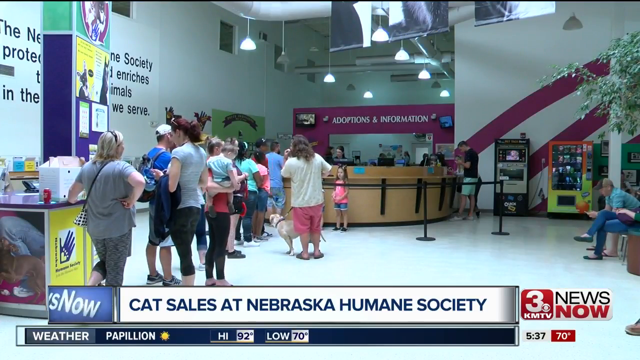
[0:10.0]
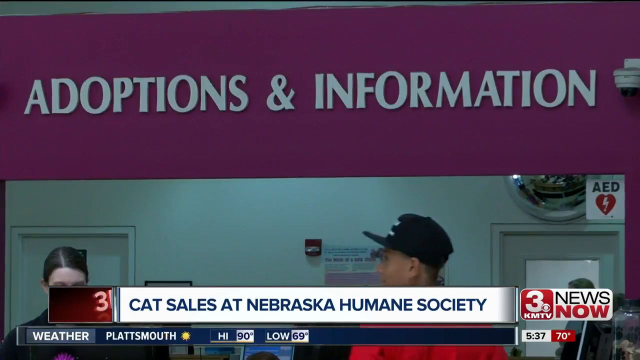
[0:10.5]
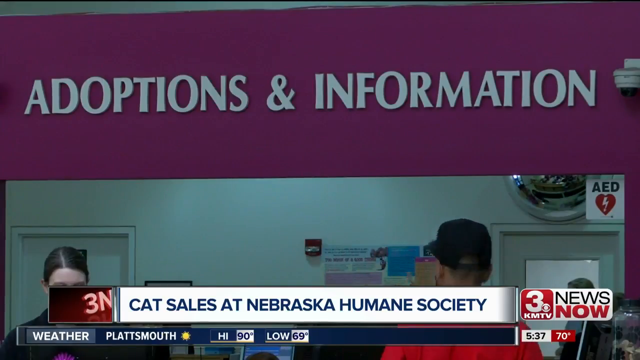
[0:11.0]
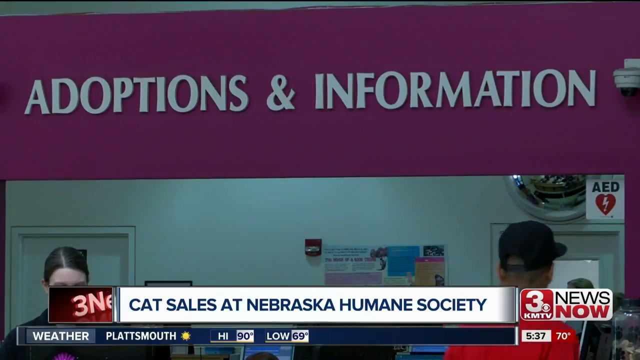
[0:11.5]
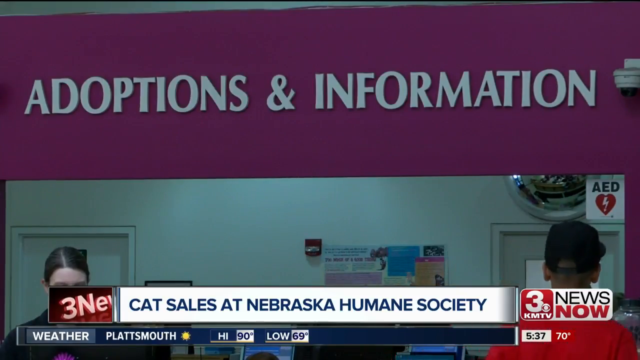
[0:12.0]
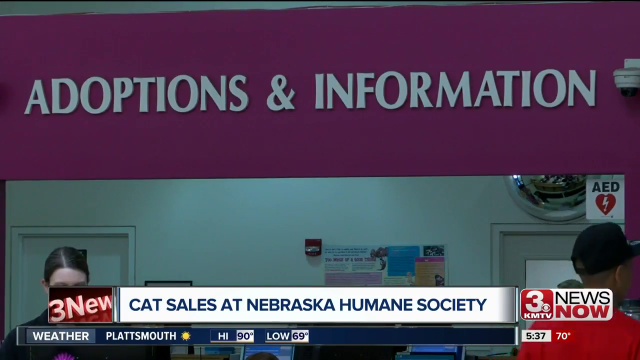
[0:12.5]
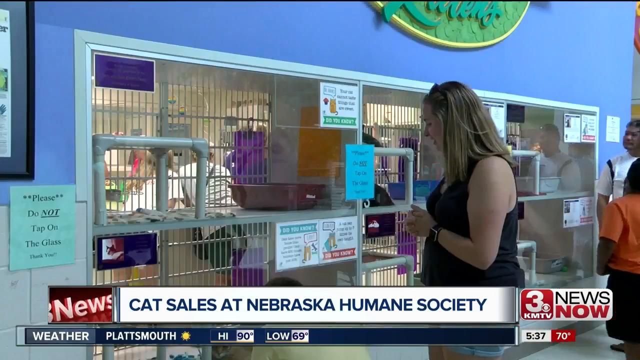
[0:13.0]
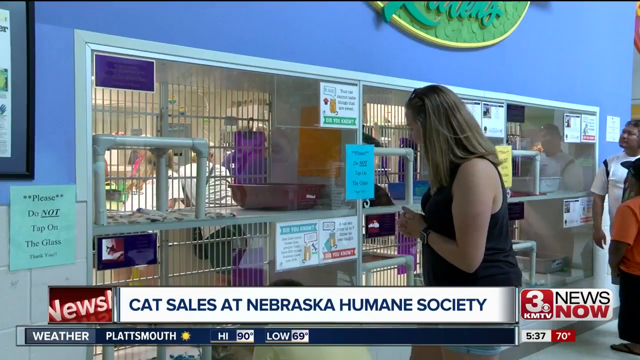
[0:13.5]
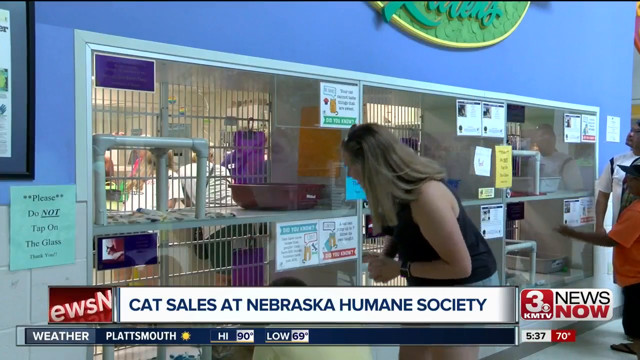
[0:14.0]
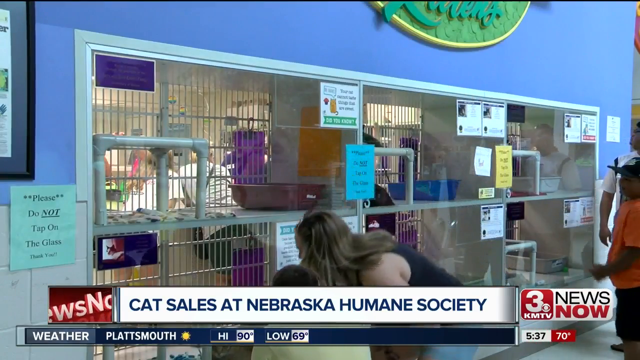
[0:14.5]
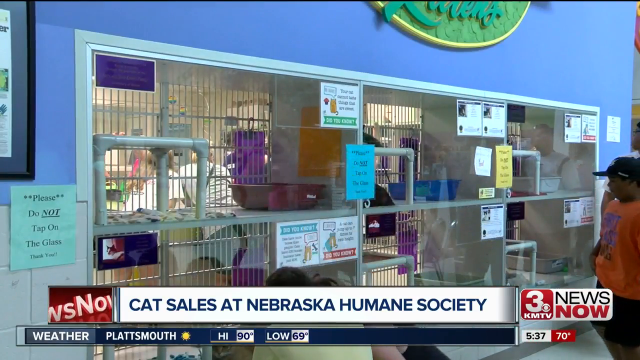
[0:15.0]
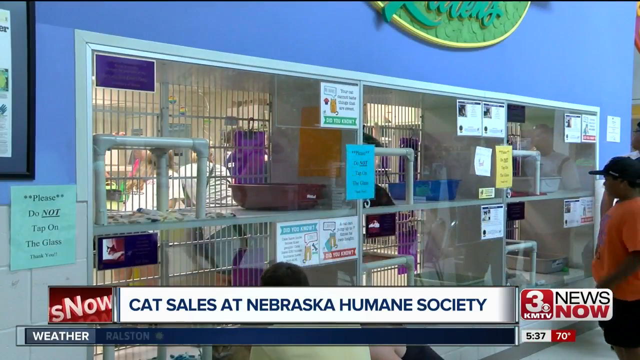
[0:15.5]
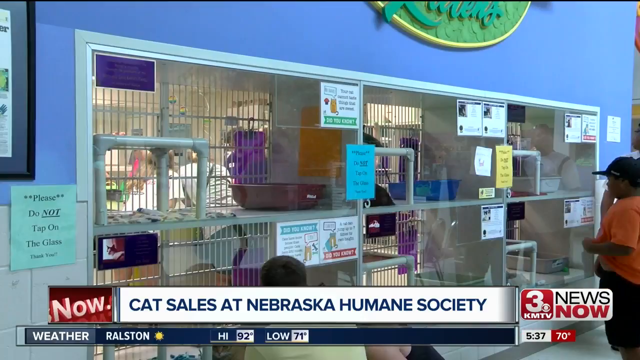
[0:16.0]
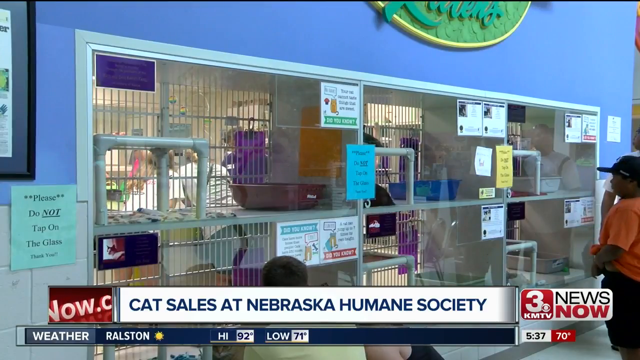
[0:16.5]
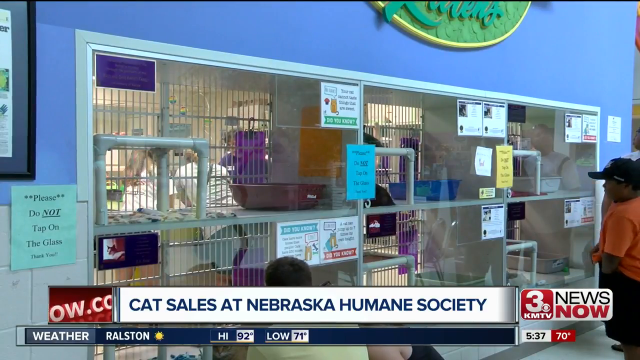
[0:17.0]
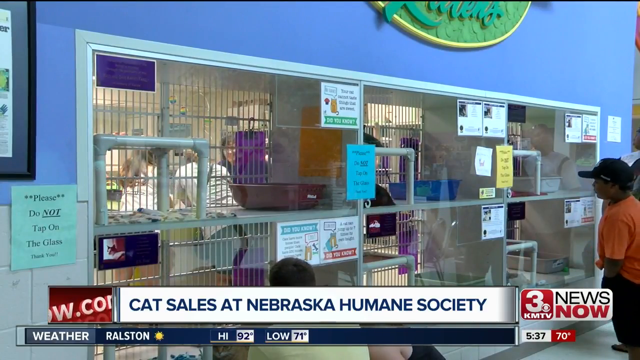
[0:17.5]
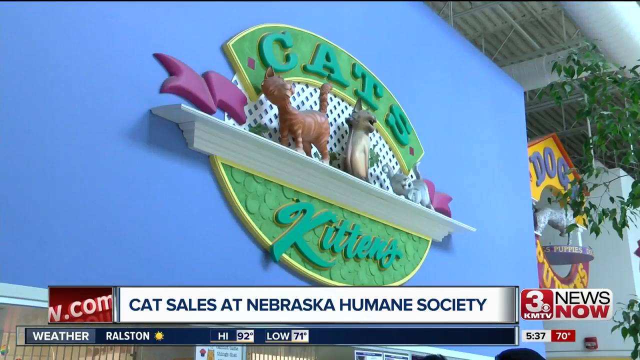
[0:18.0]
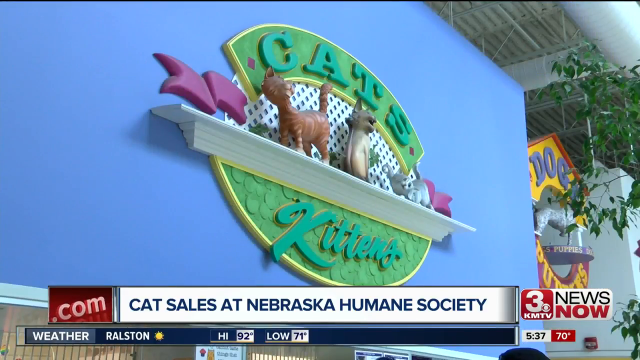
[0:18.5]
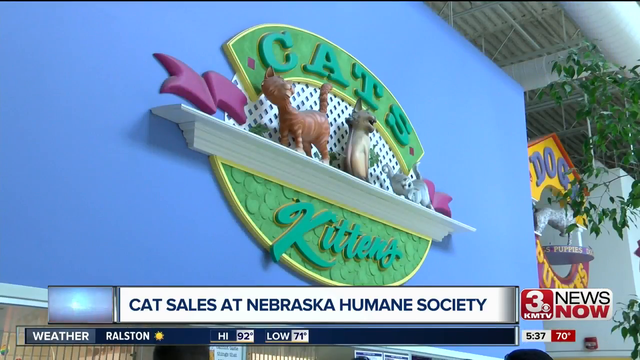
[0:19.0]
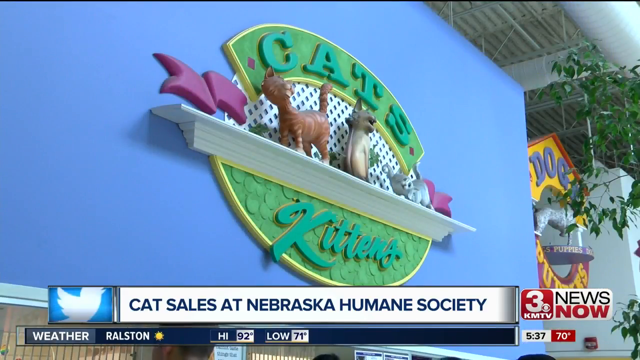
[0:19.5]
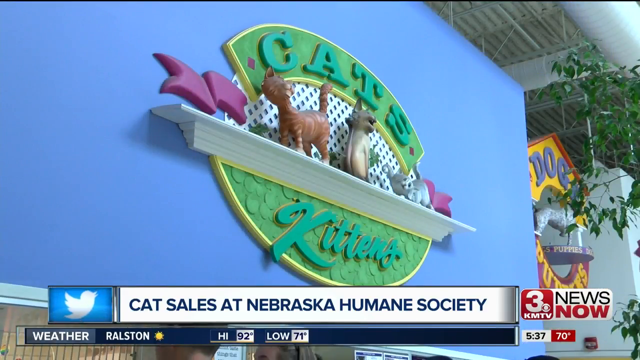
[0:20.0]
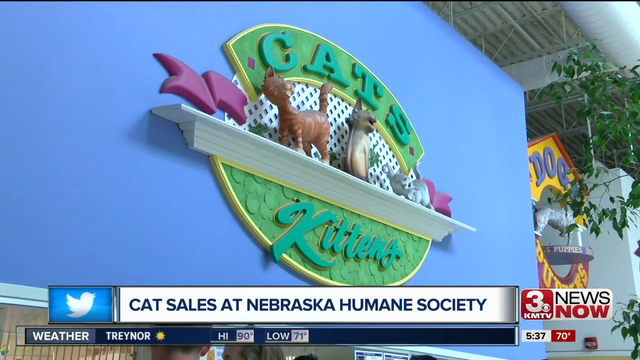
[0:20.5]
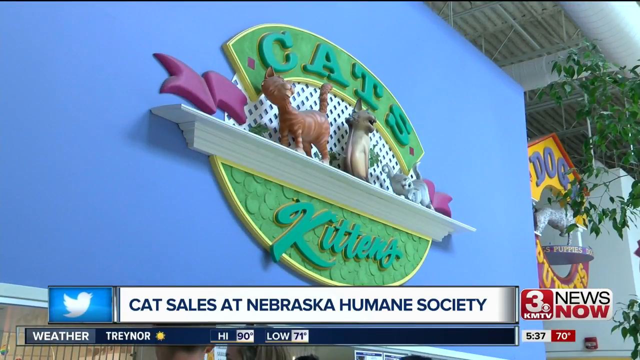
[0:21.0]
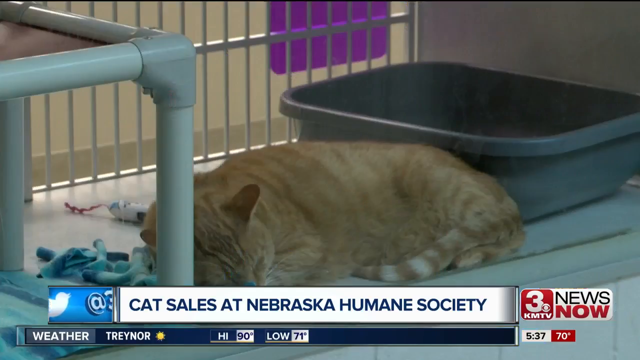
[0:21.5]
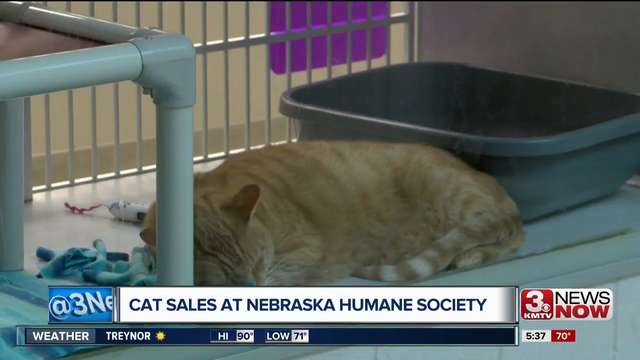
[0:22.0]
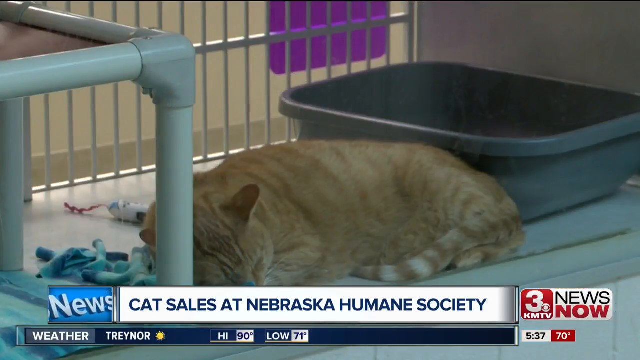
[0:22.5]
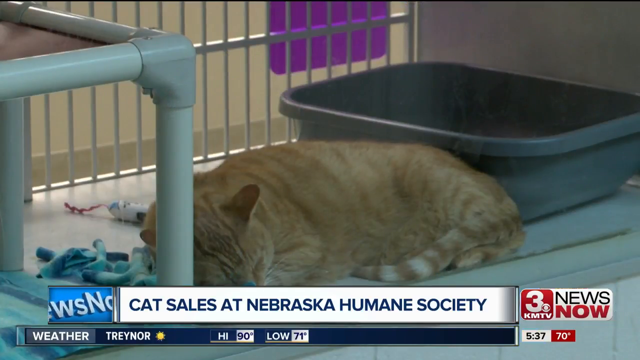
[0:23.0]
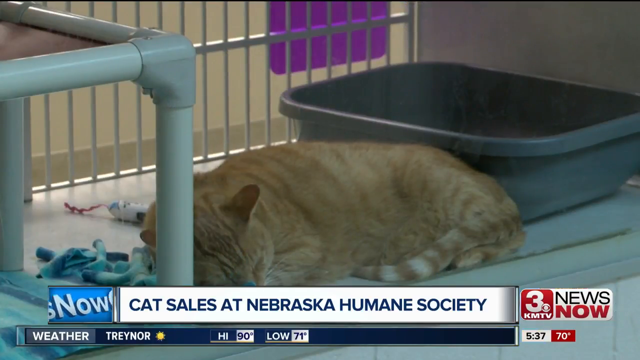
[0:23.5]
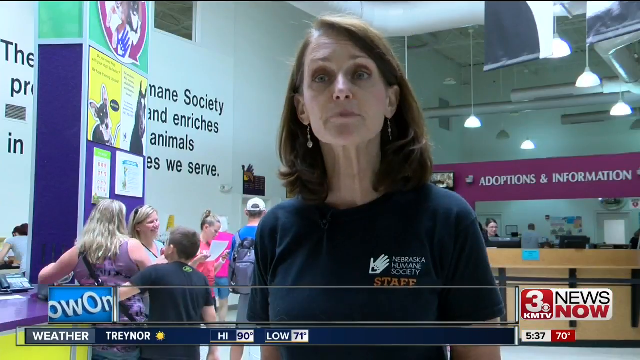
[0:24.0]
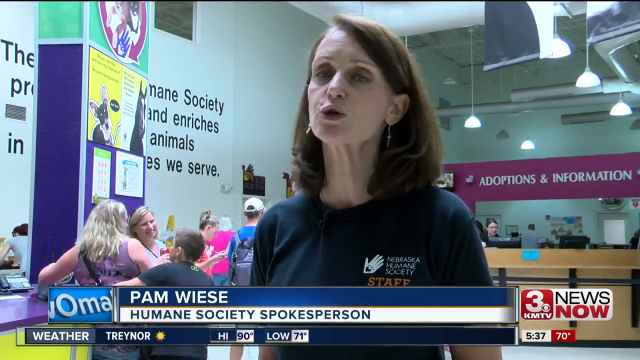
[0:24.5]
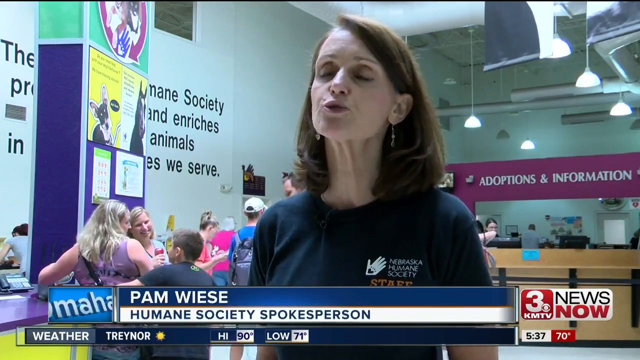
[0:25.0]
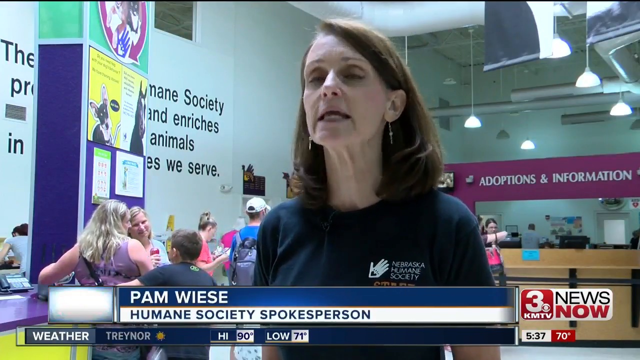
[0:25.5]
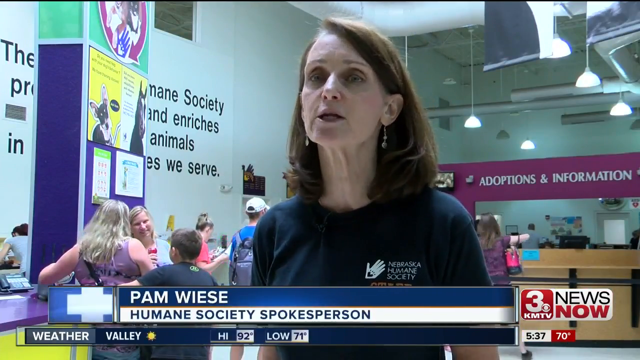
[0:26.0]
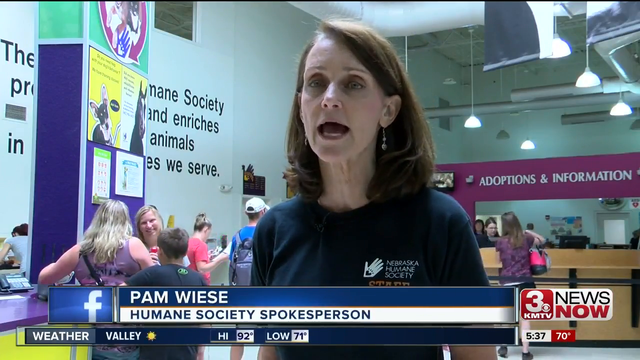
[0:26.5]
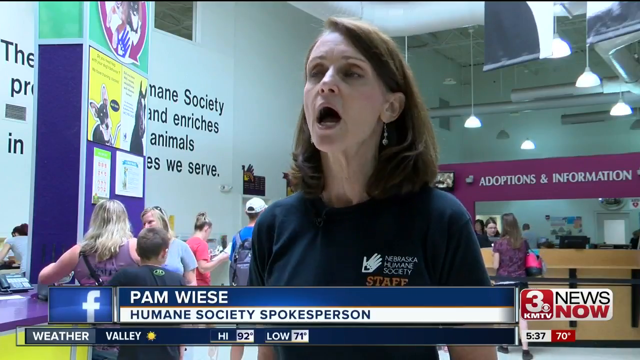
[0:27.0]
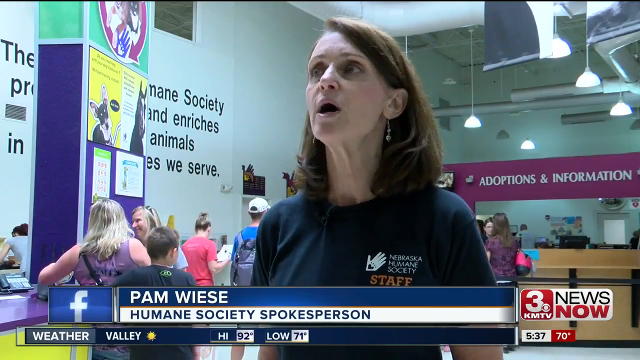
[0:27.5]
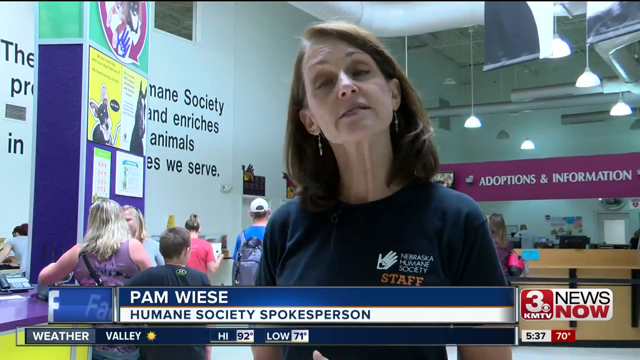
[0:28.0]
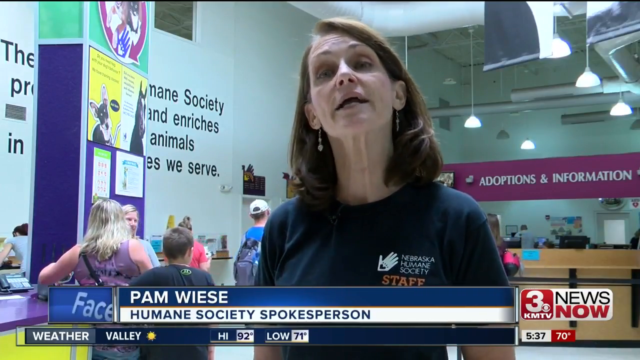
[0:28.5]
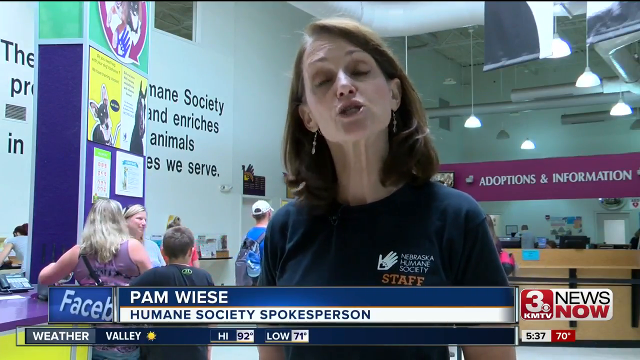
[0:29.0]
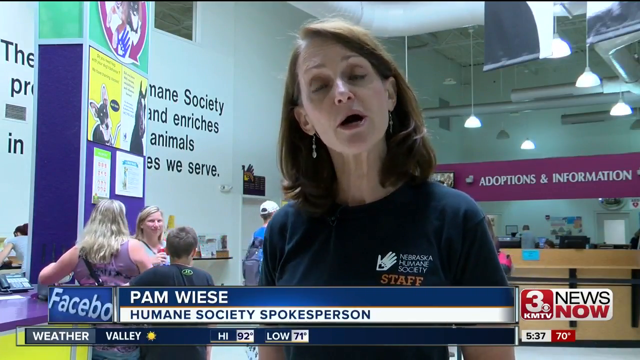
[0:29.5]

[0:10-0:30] Around 10 people stand in line from the bottom left toward the middle of the frame. In the middle is a circular brown counter with what looks like a purple background and white text above it reading "Adoptions and Information". The setting looks like the inside of a very large building. A white banner at the bottom reads "Cat Sales at Nebraska Humane Society", and "3KMTV News Now", "537" and "70 degrees" appear in the bottom right corner. The video zooms in on the "Adoptions and Information" sign, with the heads of two people below it: what looks like a man in a black cap and a woman receptionist. The scene changes to a blue wall on the left with six glass panels, three at the top and three at the bottom, with what look like cats behind them and cages behind the wall. Signs read "please do not tap on the glass". A Caucasian woman with blonde hair and a sleeveless black top stands in the middle, looking into the glass and holding both hands in front of her chest. On the right are two Hispanic people, a man and his little boy. The video then shows a sign on top of the blue wall: a green circle reading "Cats" at the top and "Kittens" at the bottom in green, with what looks like a white ledge across it and three cats sitting on it. Next comes a view inside one of the glass enclosures, where a yellow tabby cat sleeps with its head down. What look like PVC pipes are on the left side. The cat's face is at the bottom left and its body faces toward the camera and slightly left. A plastic bin is in the back, with the cage behind it. The video then transitions to a woman being interviewed in the center of the frame. She is white, around her 40s or 50s, with brown hair behind her head, and looks skinny. She wears a blue shirt with white text reading "Nebraska Humane Society" and orange text underneath reading "staff". A blue and white banner at the bottom reads "Pam Weiss, Humane Society spokesperson". She talks as she is interviewed, and the lines at the counter of the building are visible in the background.